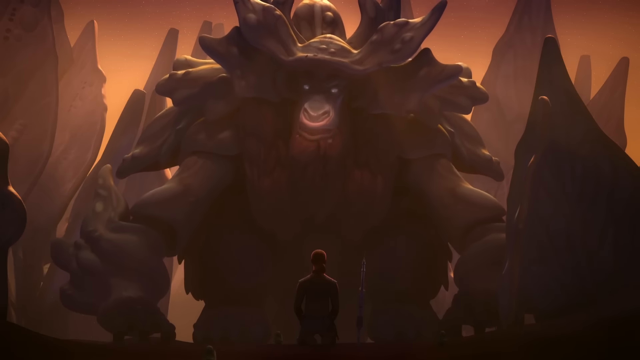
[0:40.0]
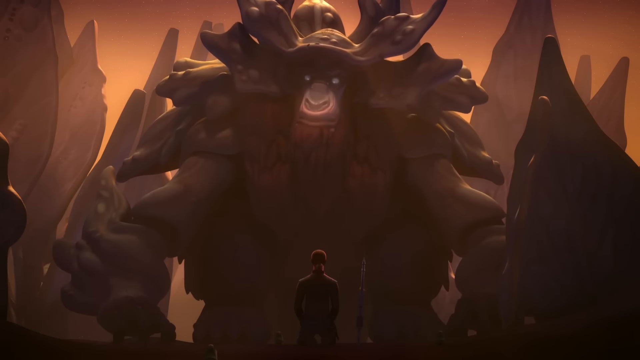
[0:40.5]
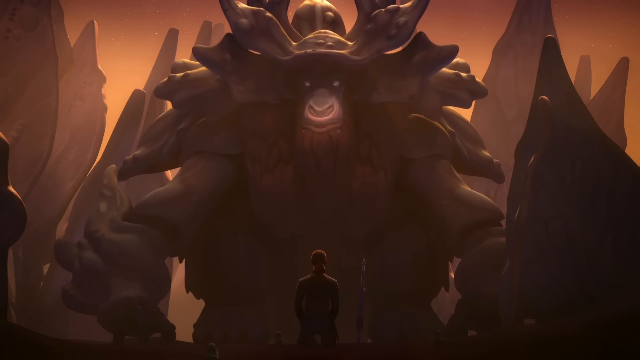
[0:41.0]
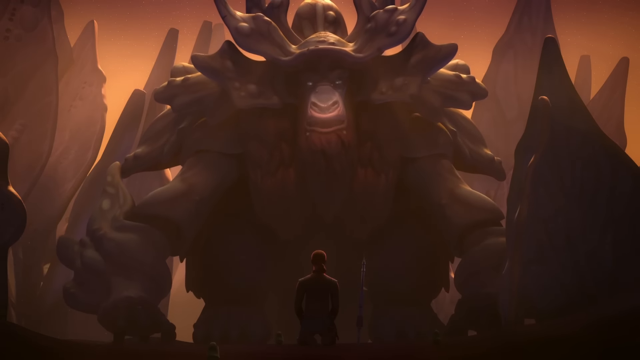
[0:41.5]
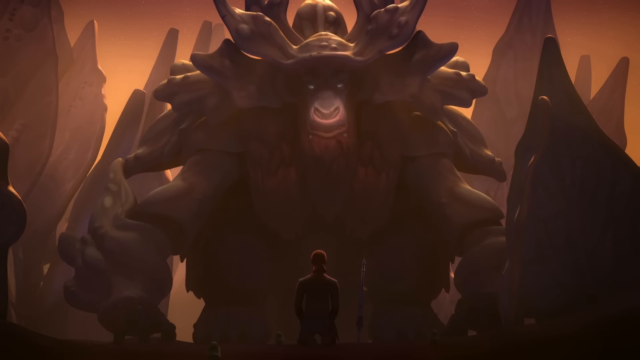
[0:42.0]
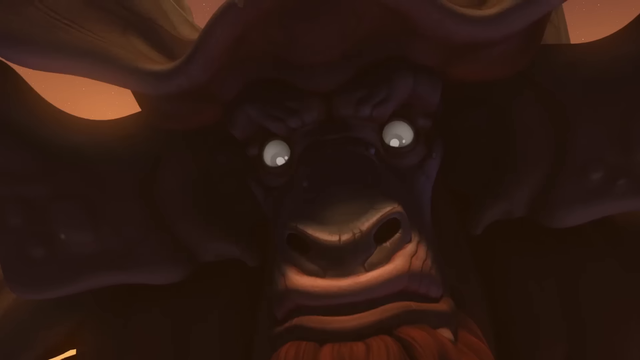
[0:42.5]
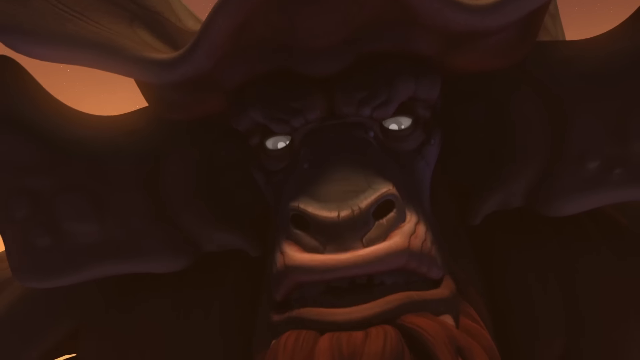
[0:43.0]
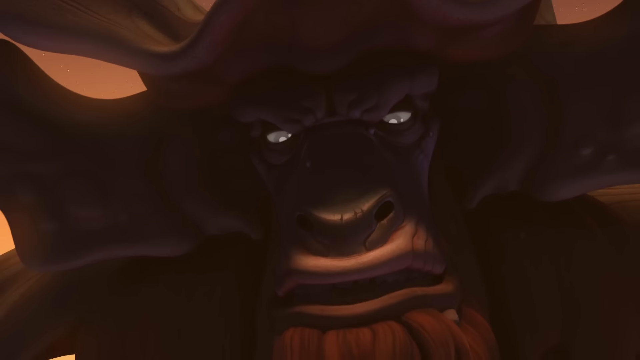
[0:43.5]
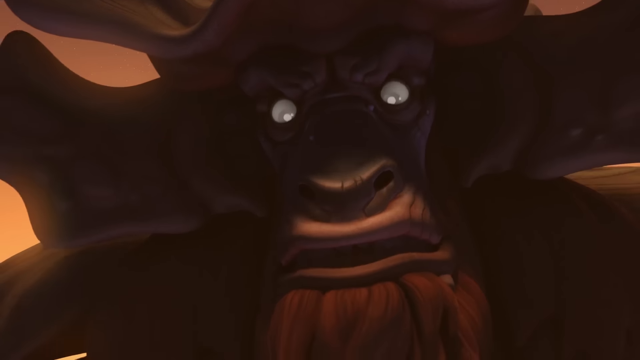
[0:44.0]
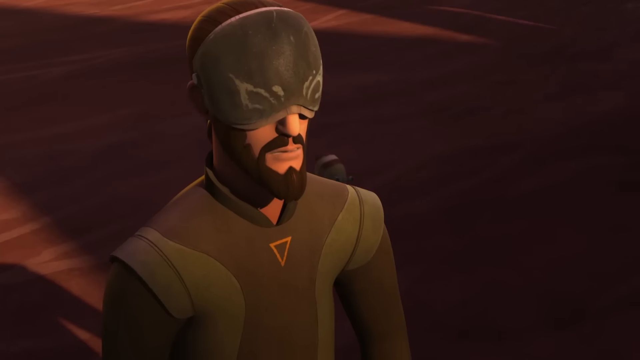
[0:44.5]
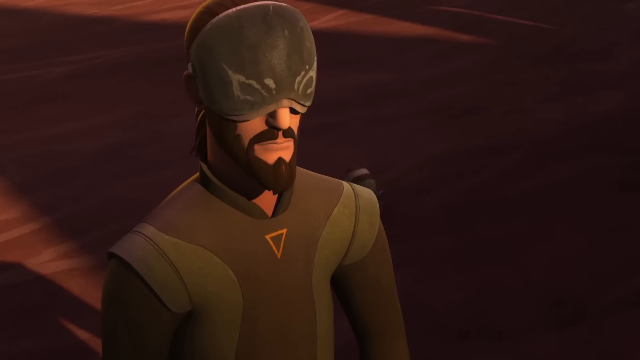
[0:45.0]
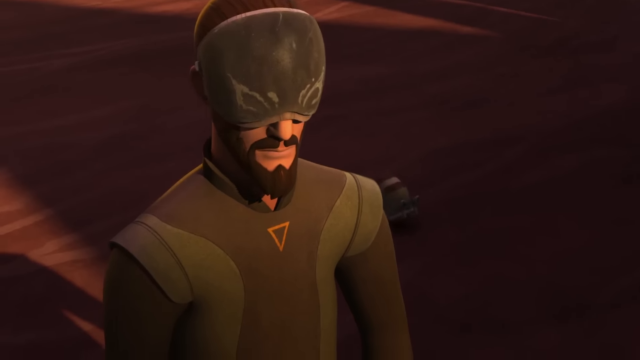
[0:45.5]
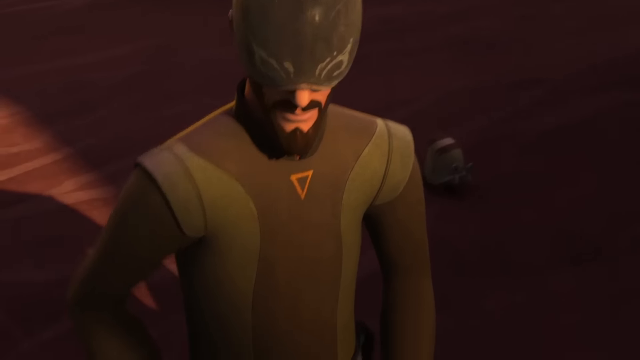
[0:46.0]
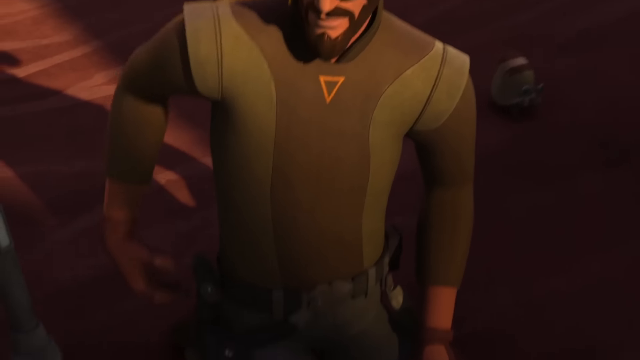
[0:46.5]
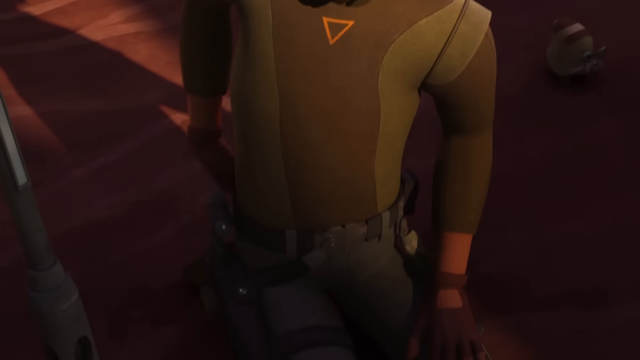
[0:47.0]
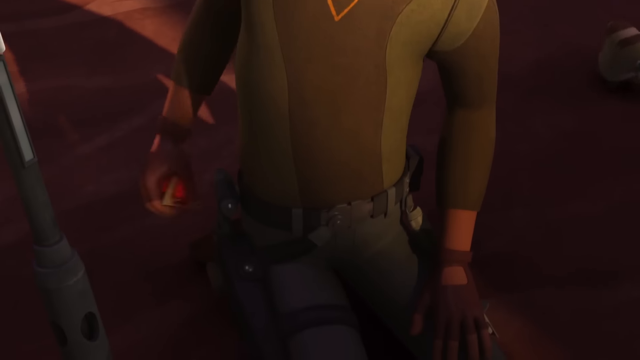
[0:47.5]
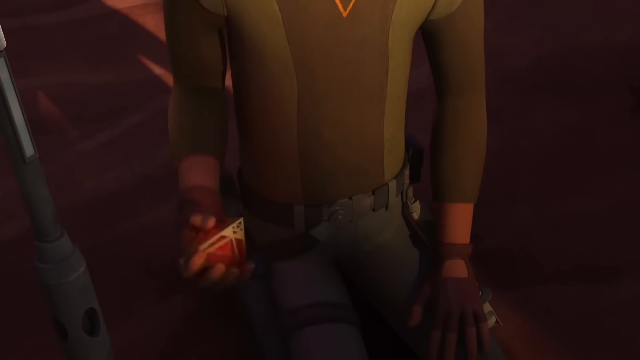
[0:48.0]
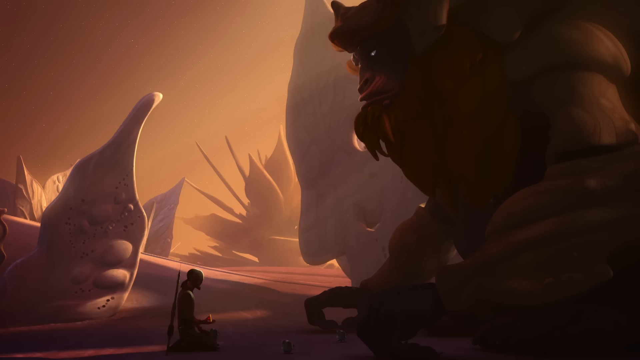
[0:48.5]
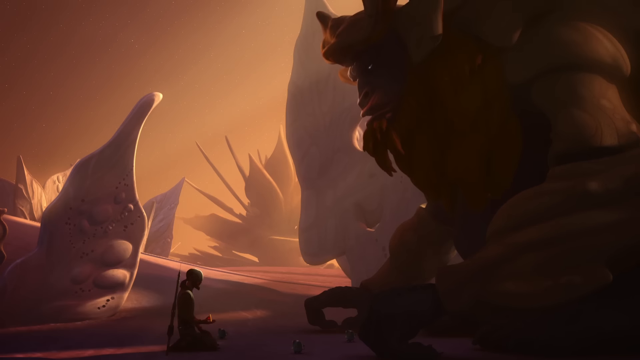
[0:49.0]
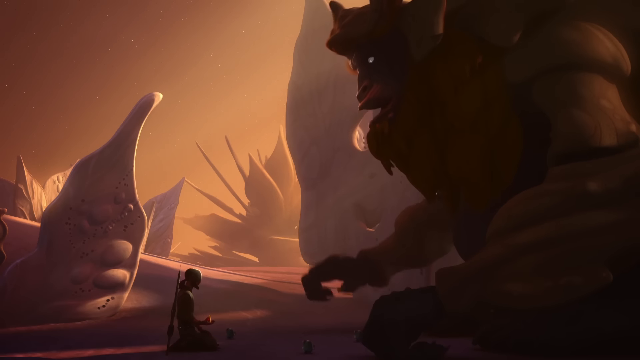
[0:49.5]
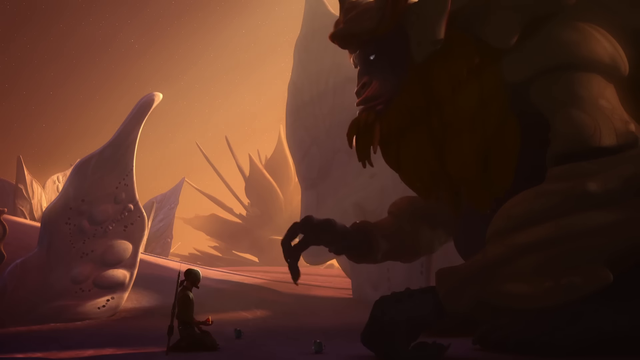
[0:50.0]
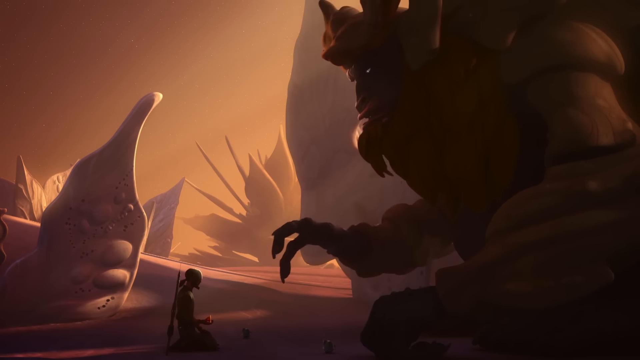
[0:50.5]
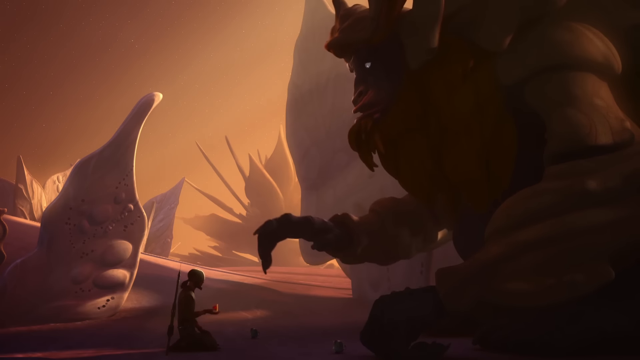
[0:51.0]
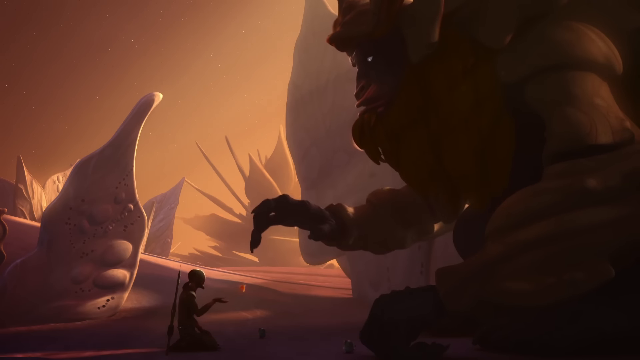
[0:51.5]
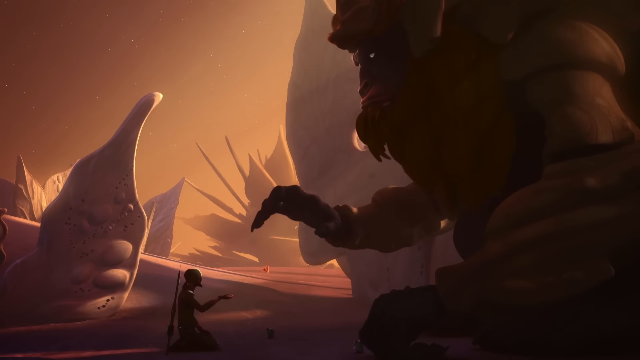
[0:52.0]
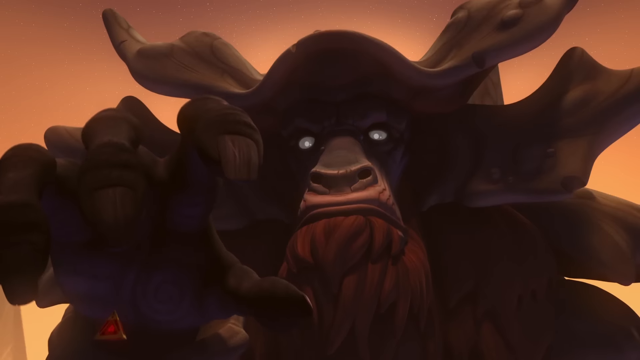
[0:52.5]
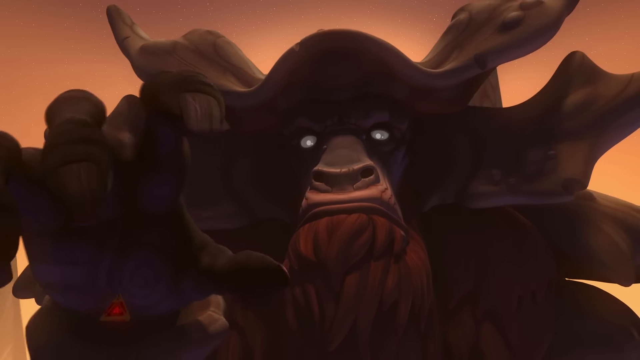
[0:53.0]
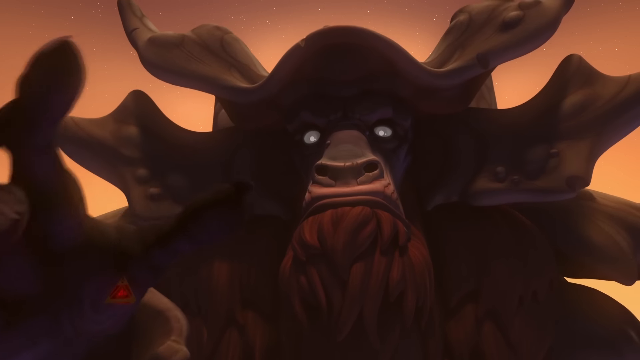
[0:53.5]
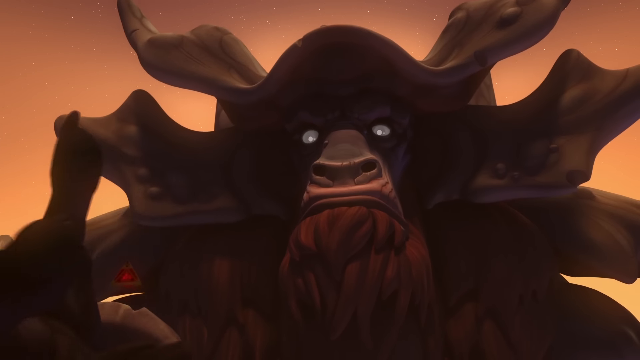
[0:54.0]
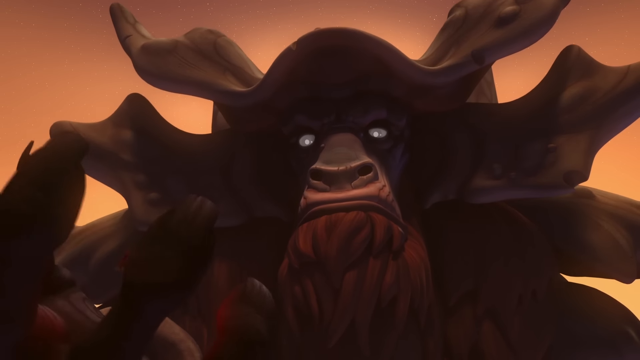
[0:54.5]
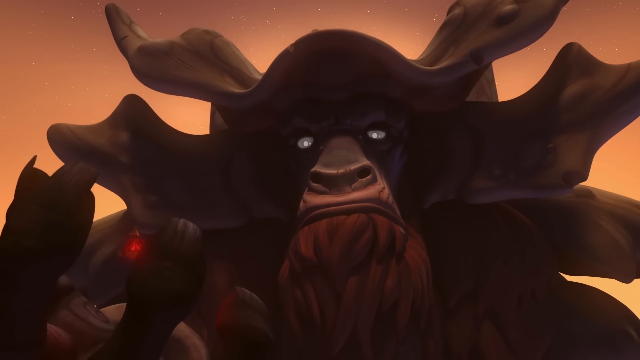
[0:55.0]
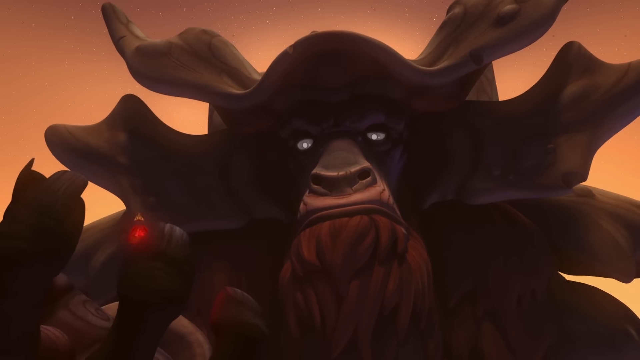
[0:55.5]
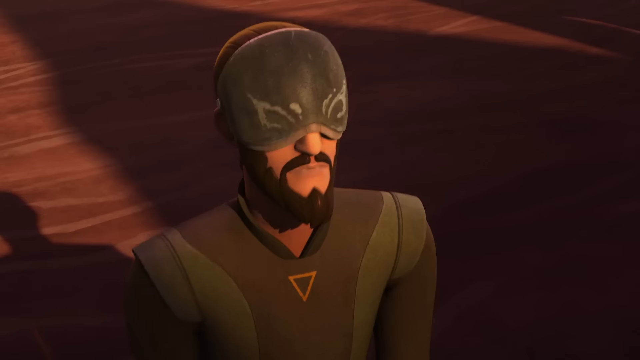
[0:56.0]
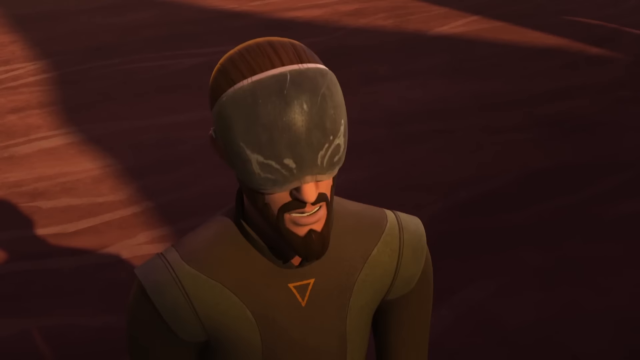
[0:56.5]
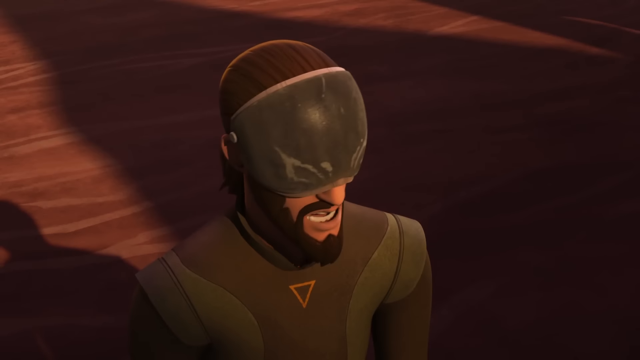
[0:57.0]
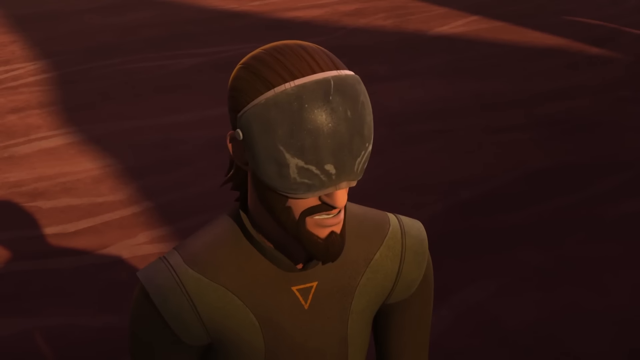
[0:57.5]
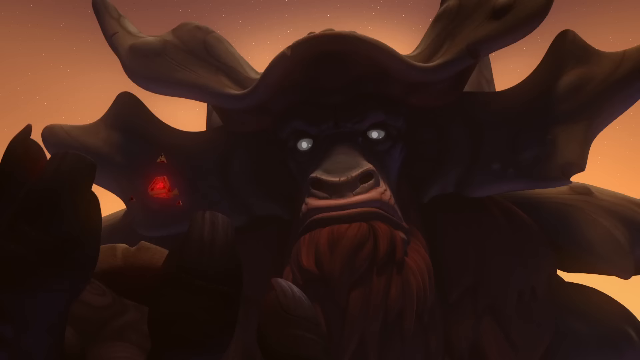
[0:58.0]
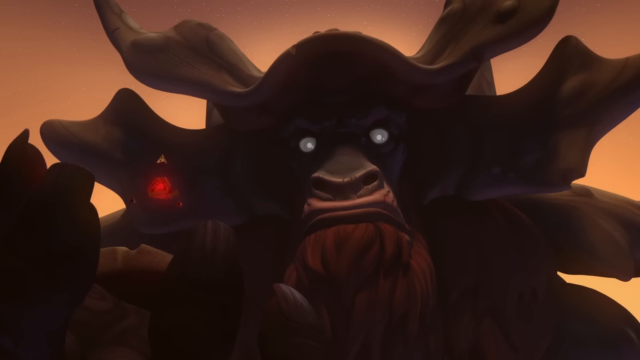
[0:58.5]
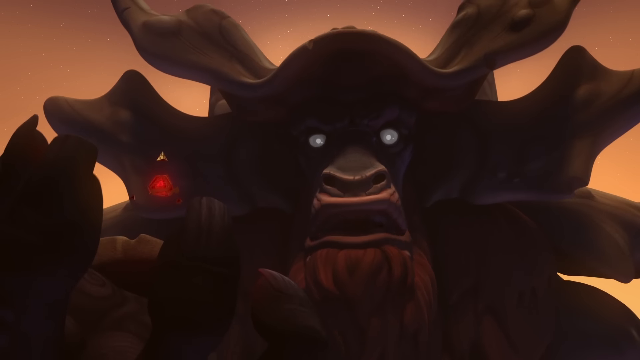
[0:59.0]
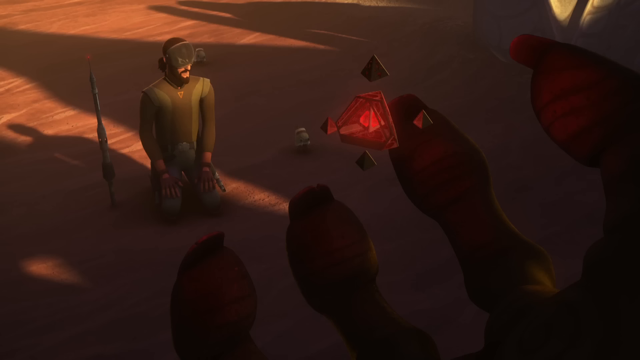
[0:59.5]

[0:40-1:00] The large monster is in the center of the screen. He looks to be made of hair or stone in a fancy design pattern, with large horns on his head, shoulders, and elbows, and forearms that seem kind of spiky as well. He has a large beard, a hairy chest, and a face very similar to a minotaur's, with a bull-like nose and mouth. In front of him, seen from behind, a man kneels with one hand on each knee. The monster and the man look at each other patiently, and both seem understanding at first, but the man reaches over and grabs a device from his back. The monster magically takes it into his hand and looks at it with distrust, and he asks the man why he brought this red cube, which has sparks and swirling light inside it.